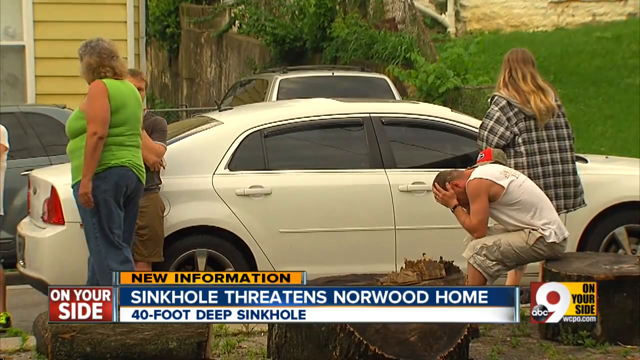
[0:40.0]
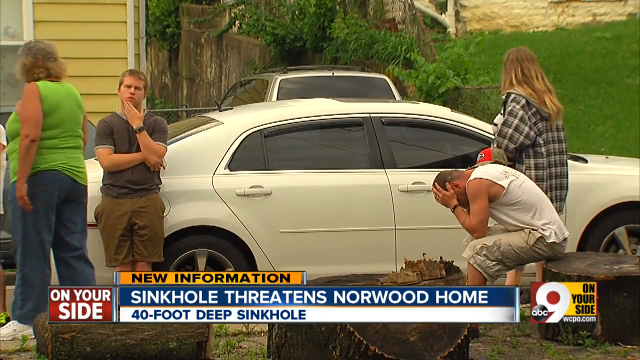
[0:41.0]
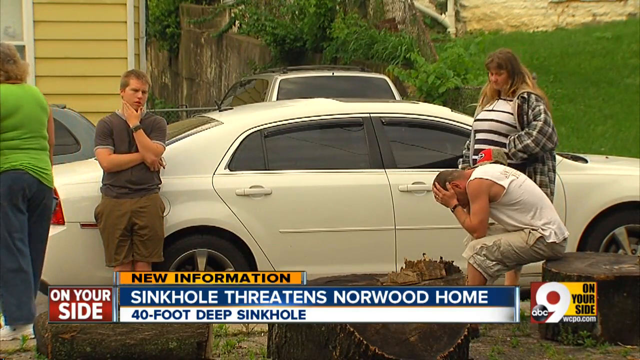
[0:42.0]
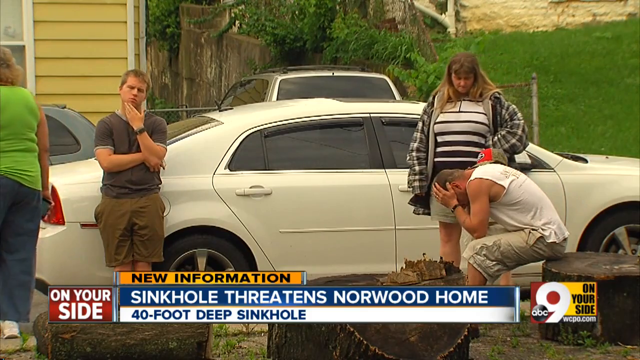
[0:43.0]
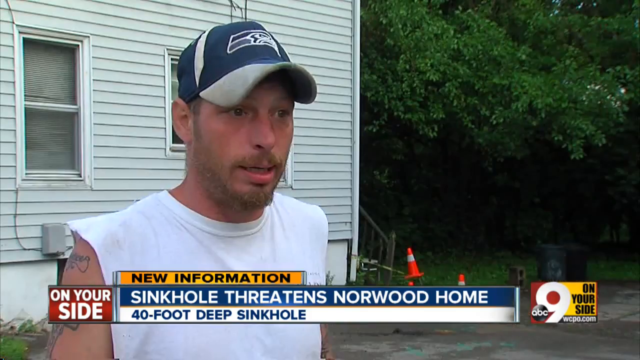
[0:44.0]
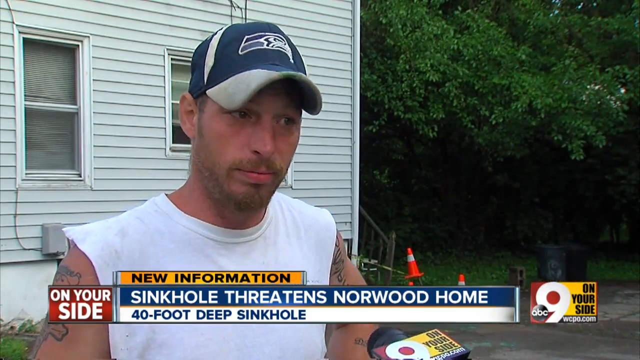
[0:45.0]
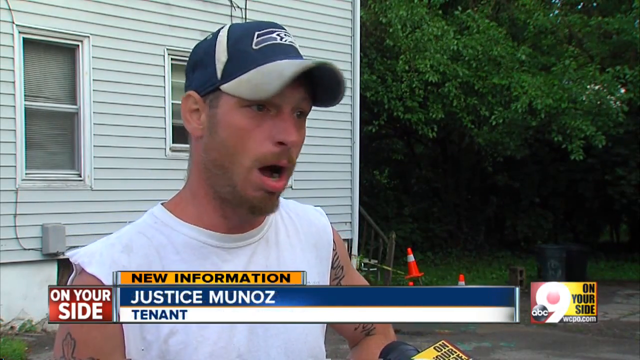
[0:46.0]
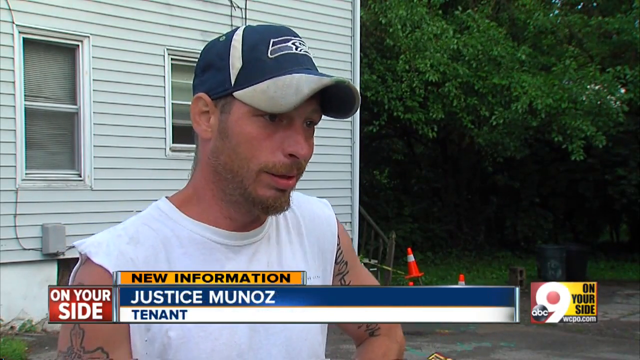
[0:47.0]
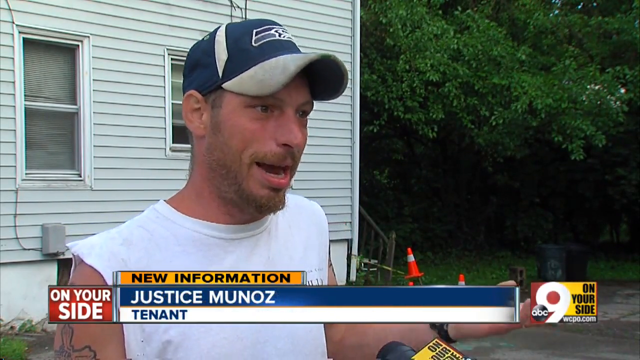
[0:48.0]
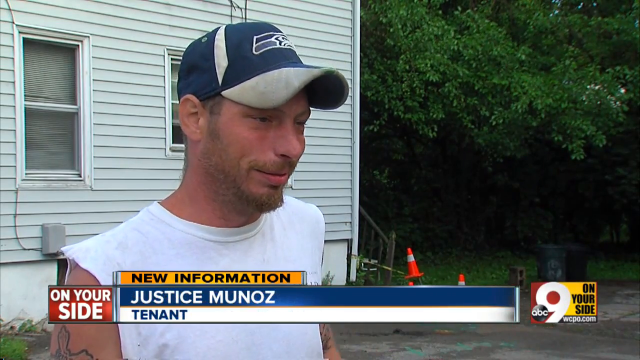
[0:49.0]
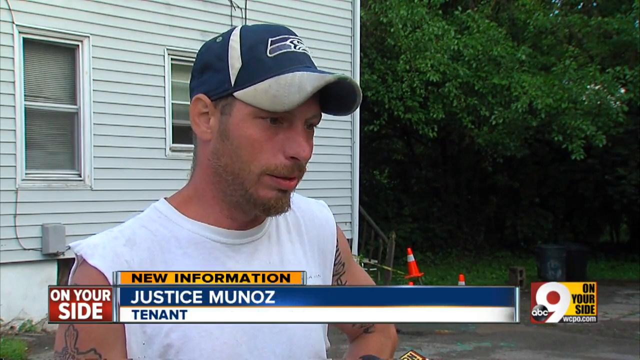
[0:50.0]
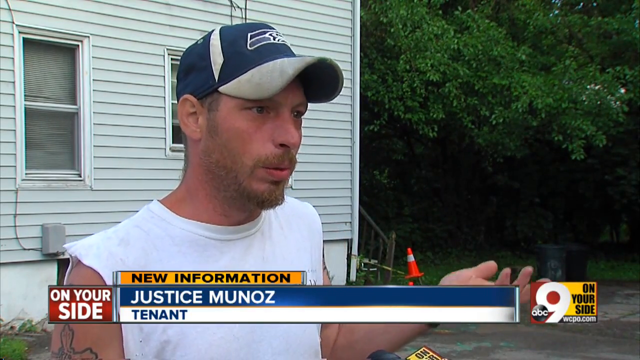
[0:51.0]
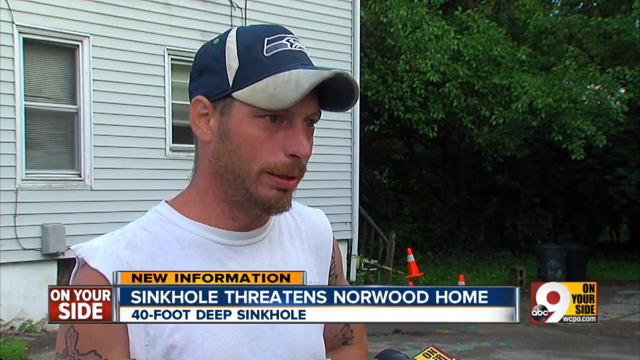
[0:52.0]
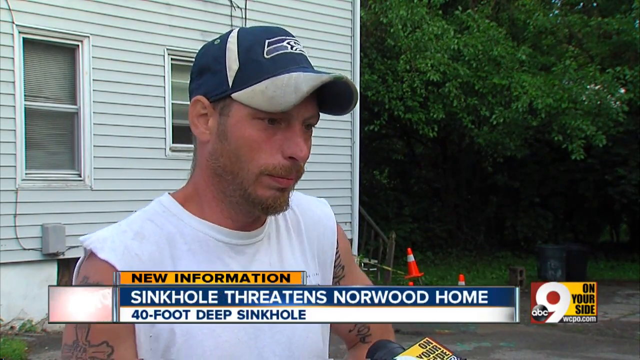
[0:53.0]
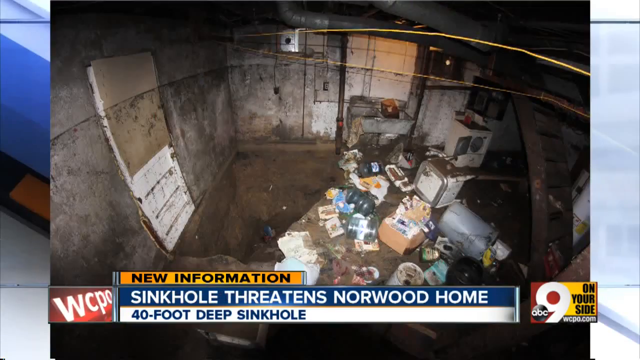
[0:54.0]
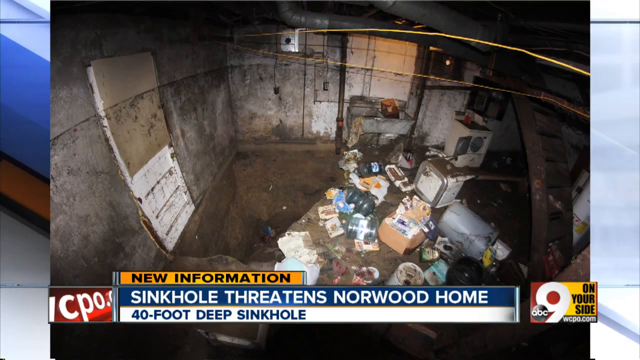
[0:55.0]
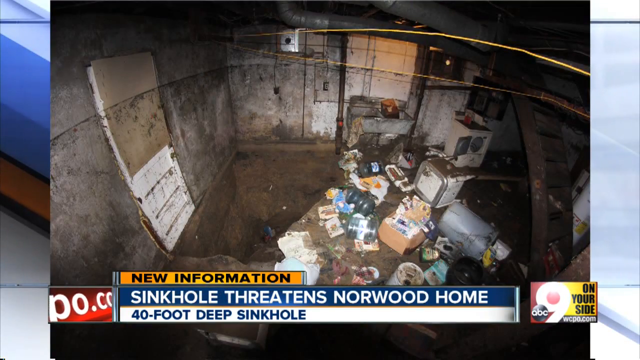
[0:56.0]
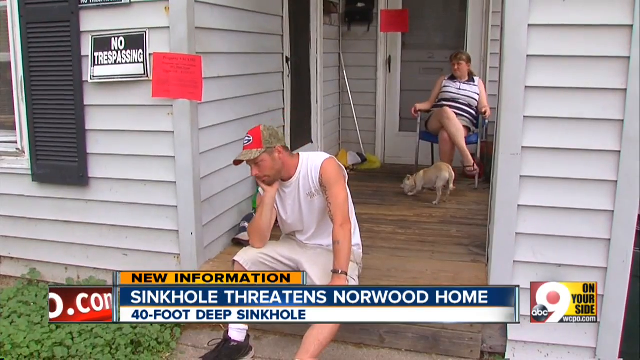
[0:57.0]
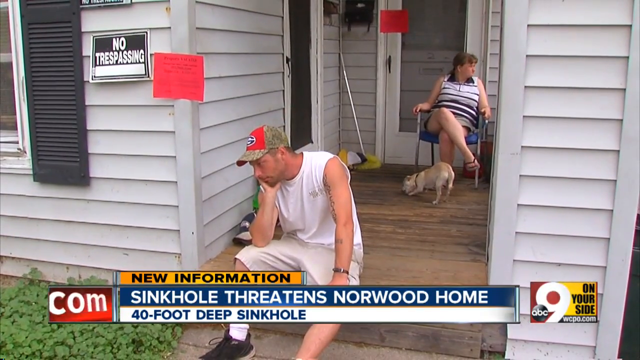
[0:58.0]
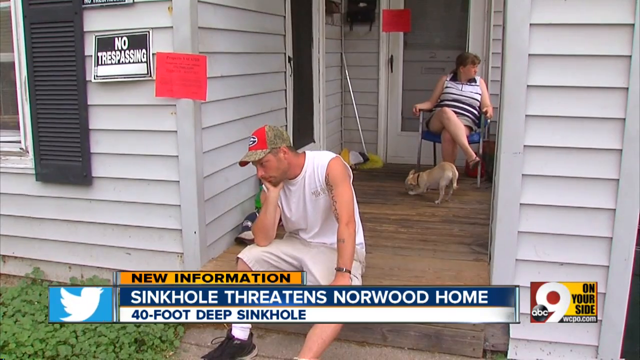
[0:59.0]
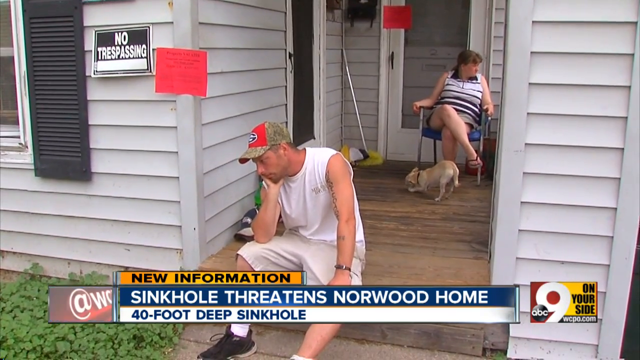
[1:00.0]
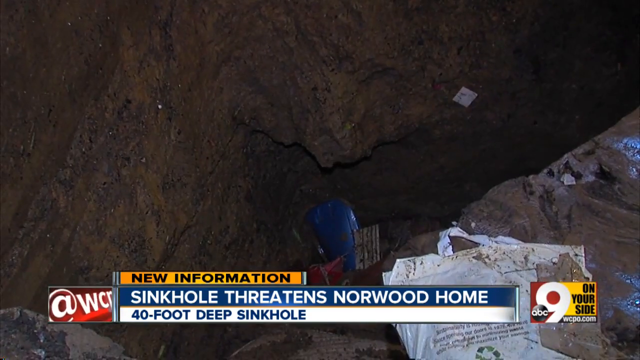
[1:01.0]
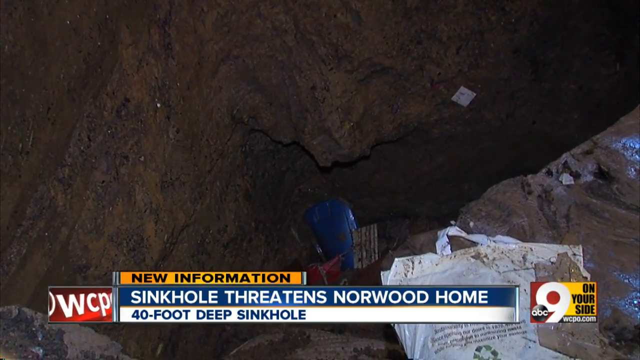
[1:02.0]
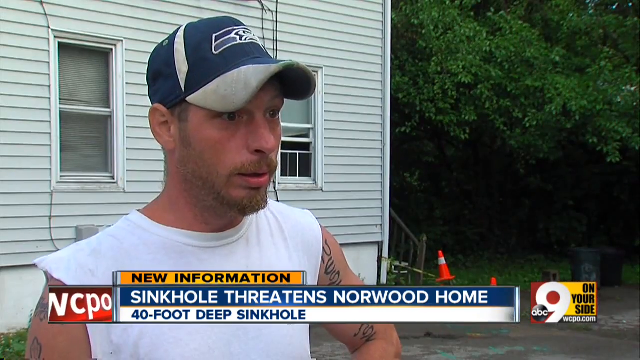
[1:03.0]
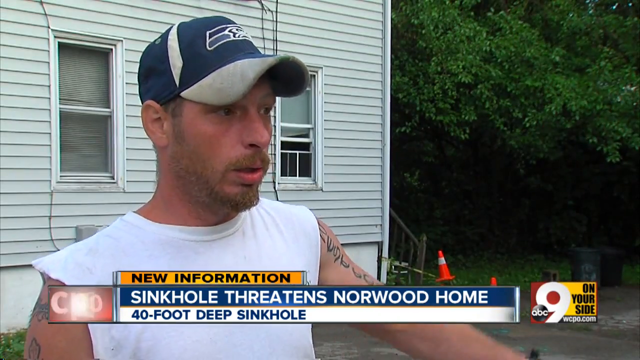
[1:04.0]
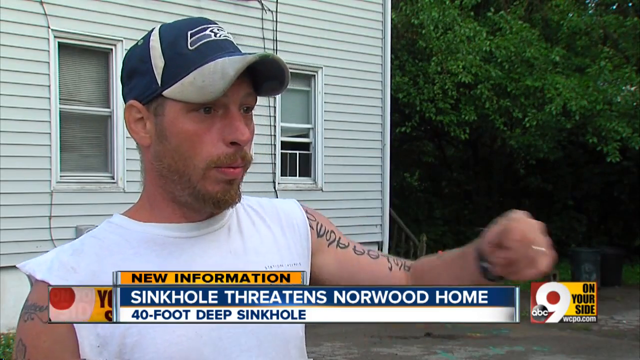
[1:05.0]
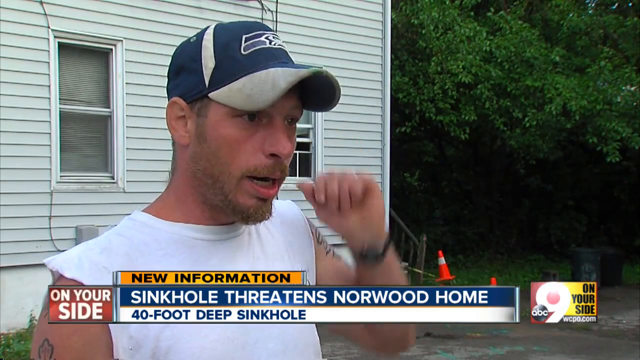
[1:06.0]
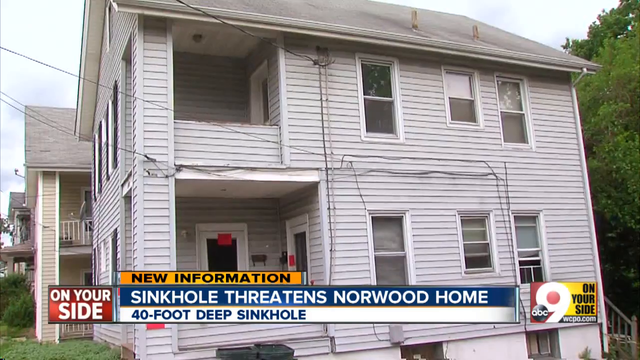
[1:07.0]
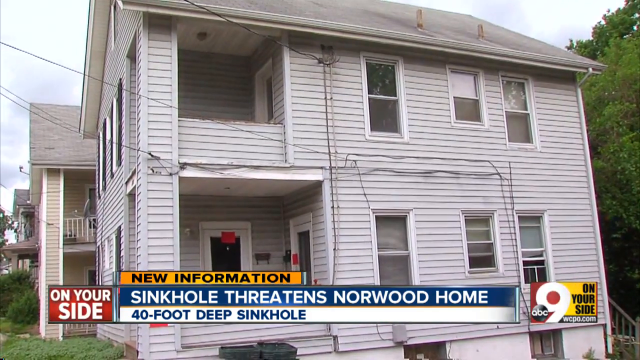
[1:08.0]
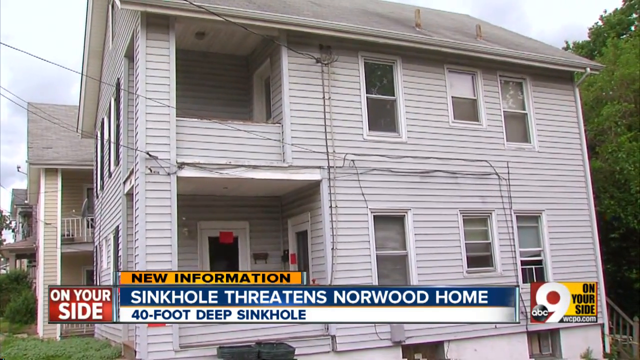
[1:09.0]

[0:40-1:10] The woman runs by the sinkhole, and on-screen text reads "sinkhole threatens Norwood home." The sinkhole and the dump truck she ran past are shown. Scraps from inside a home where the sinkhole opened up within the house appear: some things have fallen in and some have been salvaged. Outside the home, a man has his head in his hands on his knees, apparently in distress. A white car is parked there, somewhat blocking the street. A man in dark khaki pants has one arm folded across his chest and his hand touching his mouth. A woman in a black and white flannel shirt is carrying something and looking at or into the car window, and an older woman in a green shirt on the far left is walking off. A heavyset woman turns around to console the man. Someone stands up to make a statement; he apparently wears a baseball cap and has a goatee, and he shakes his head. On-screen text shows the name "Justice Munoz", though it is unclear whether that is this man's name or the reporter's. He holds his arms out and appears frustrated.